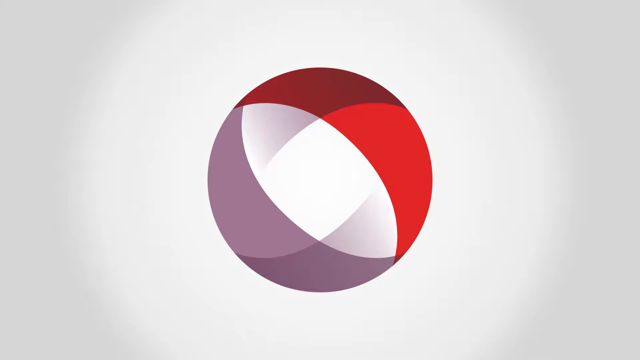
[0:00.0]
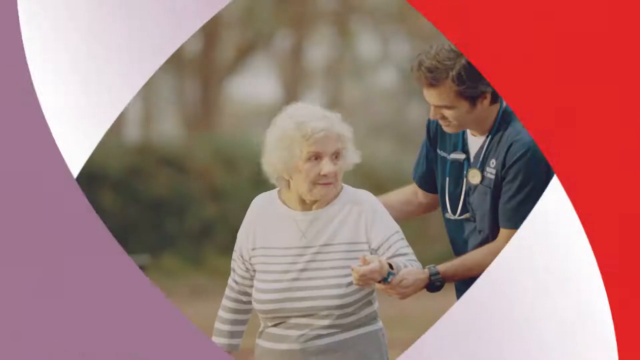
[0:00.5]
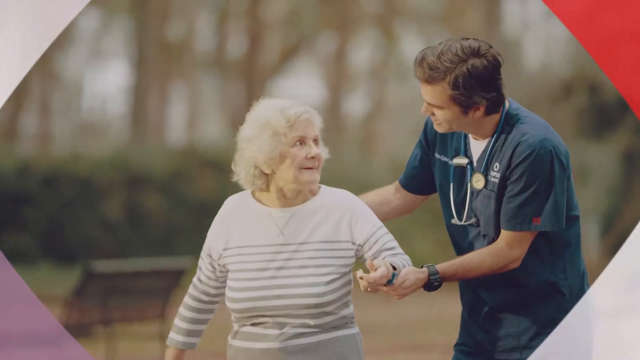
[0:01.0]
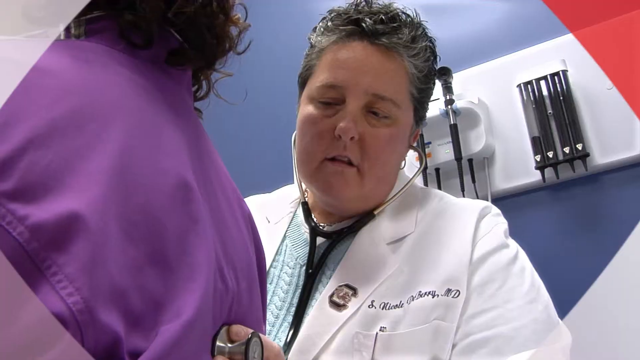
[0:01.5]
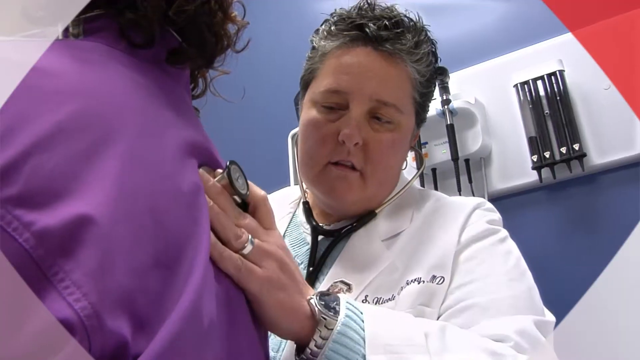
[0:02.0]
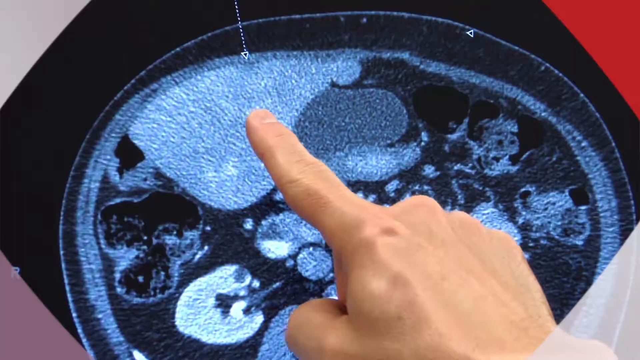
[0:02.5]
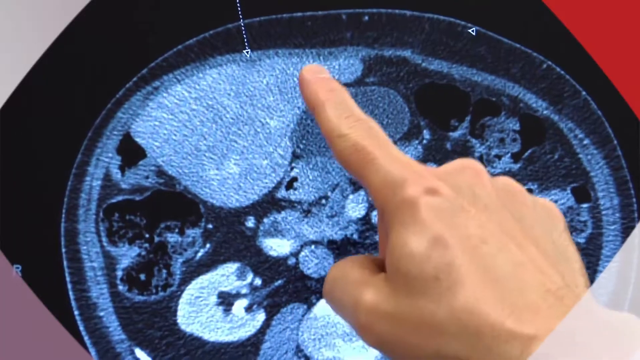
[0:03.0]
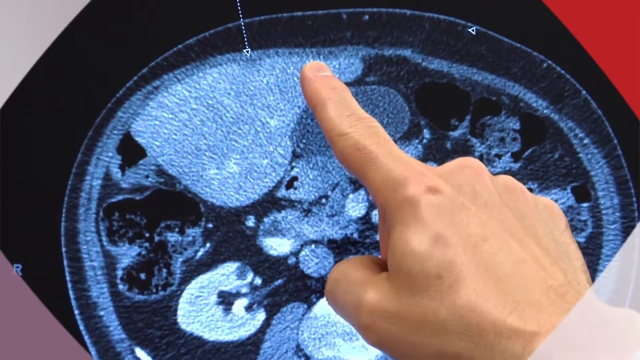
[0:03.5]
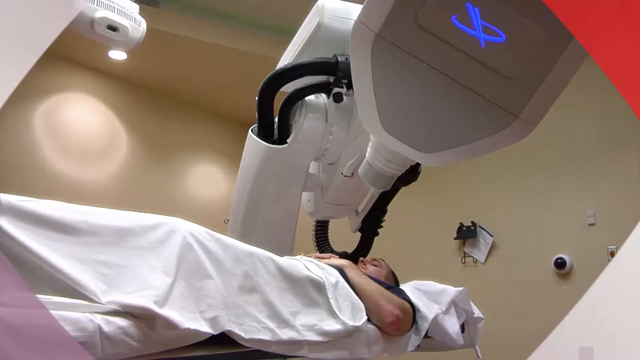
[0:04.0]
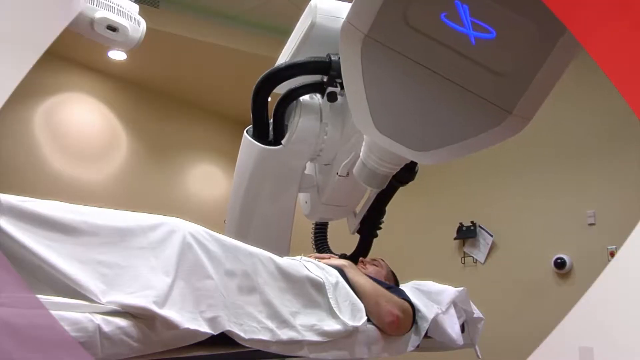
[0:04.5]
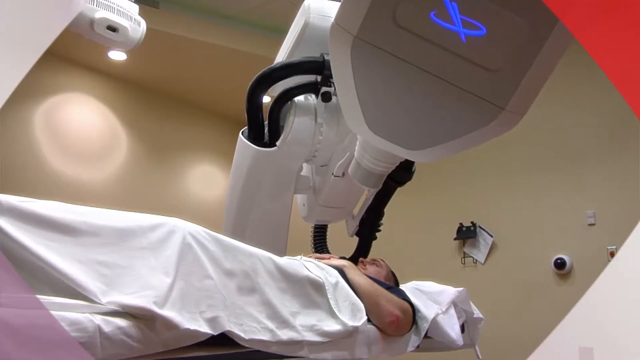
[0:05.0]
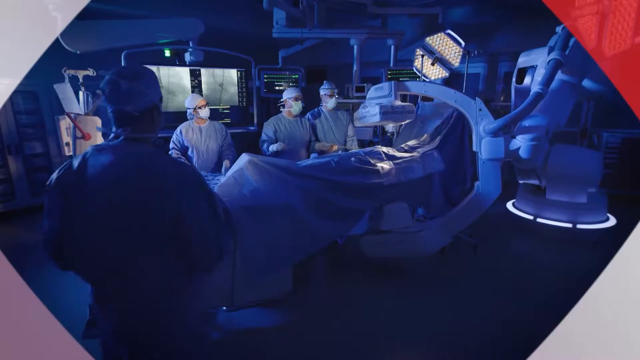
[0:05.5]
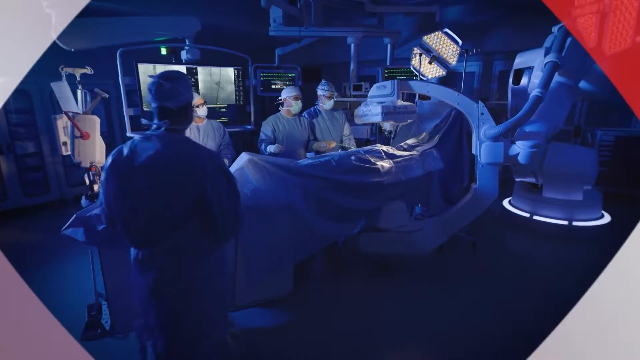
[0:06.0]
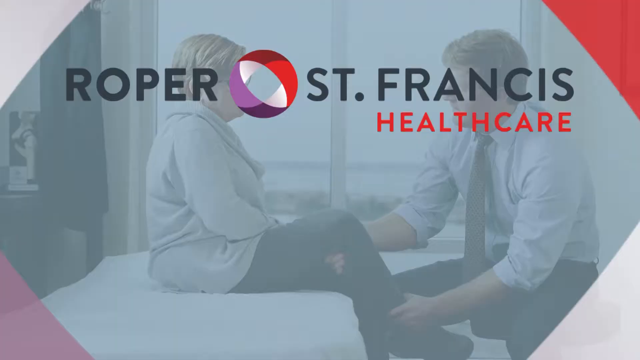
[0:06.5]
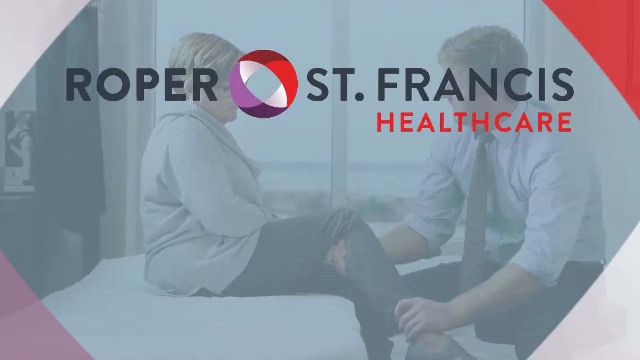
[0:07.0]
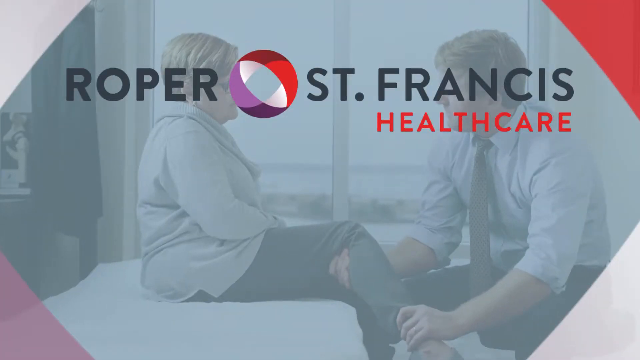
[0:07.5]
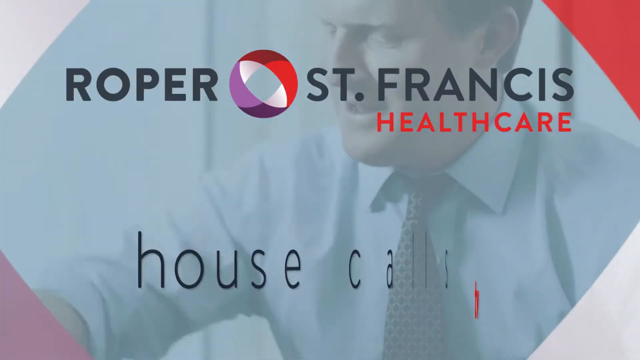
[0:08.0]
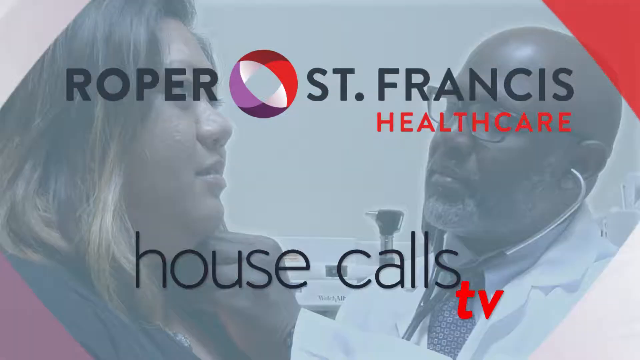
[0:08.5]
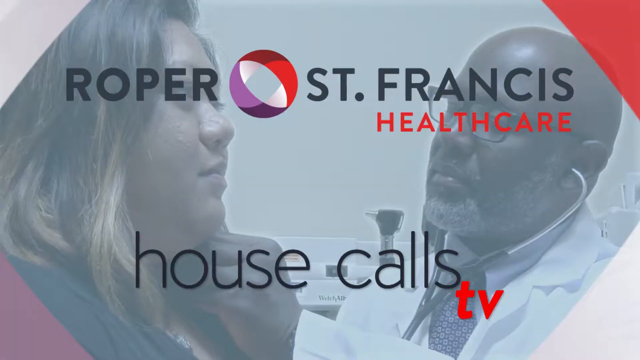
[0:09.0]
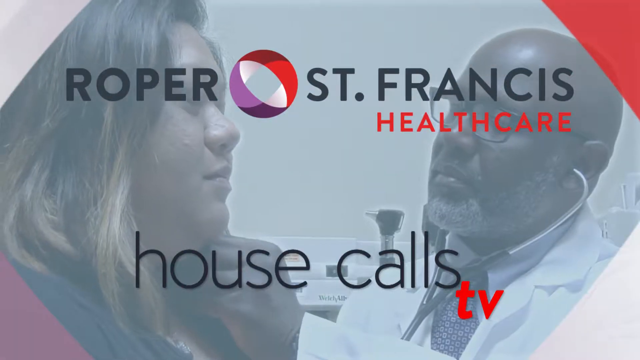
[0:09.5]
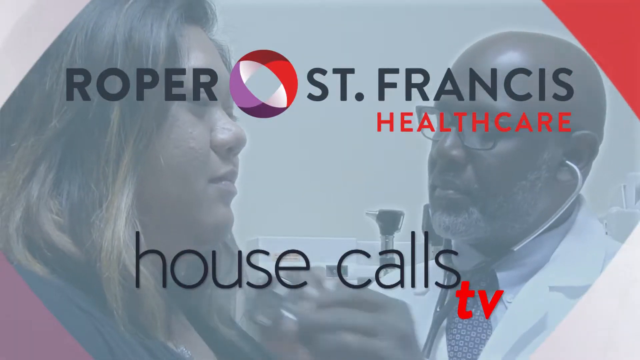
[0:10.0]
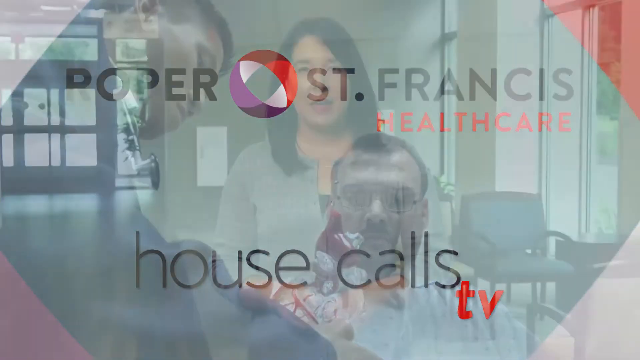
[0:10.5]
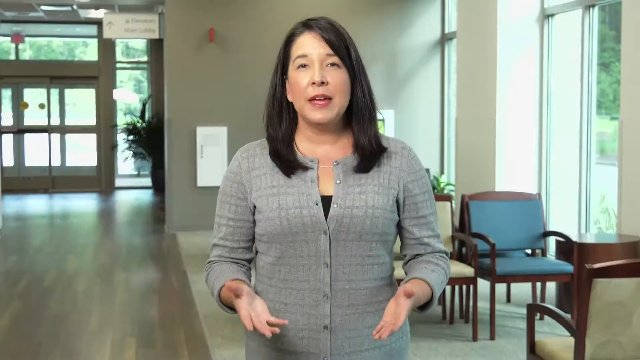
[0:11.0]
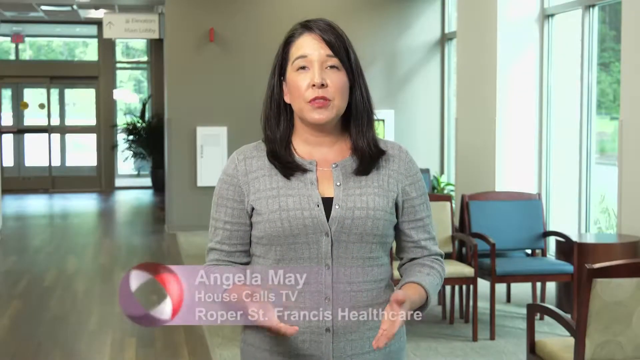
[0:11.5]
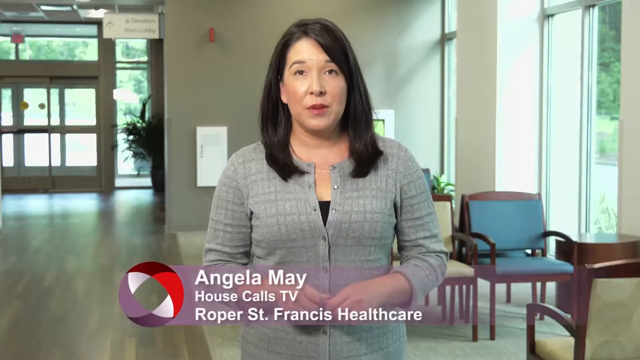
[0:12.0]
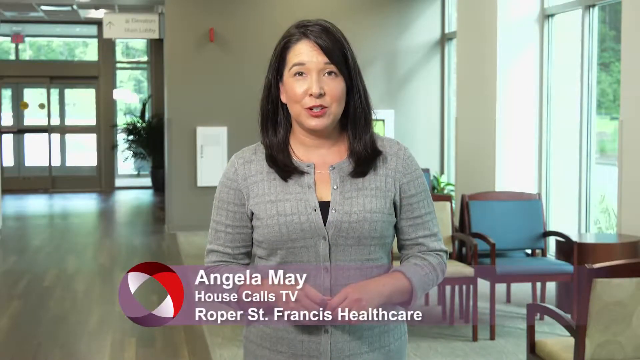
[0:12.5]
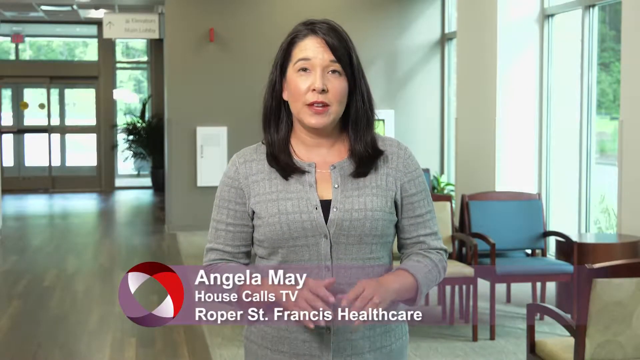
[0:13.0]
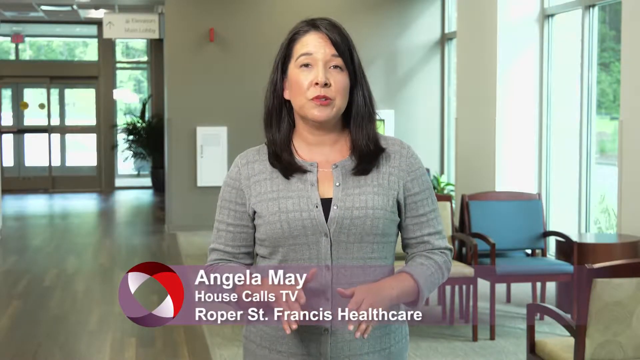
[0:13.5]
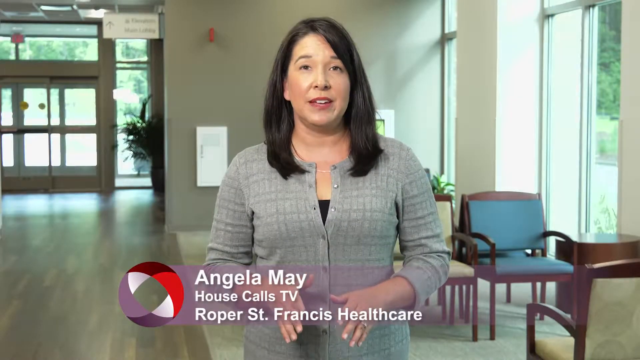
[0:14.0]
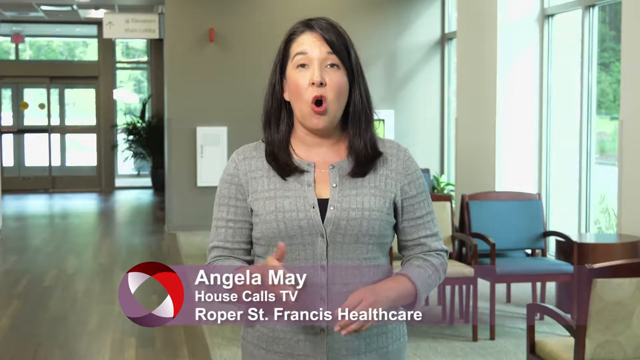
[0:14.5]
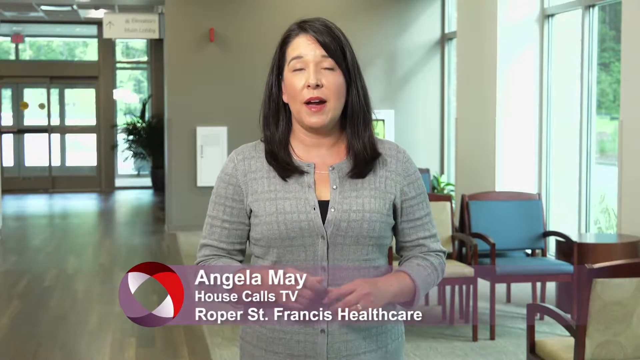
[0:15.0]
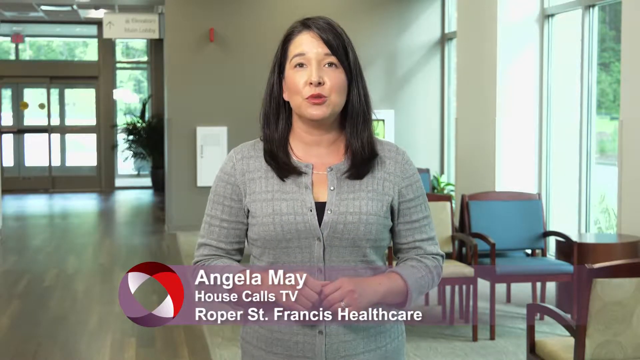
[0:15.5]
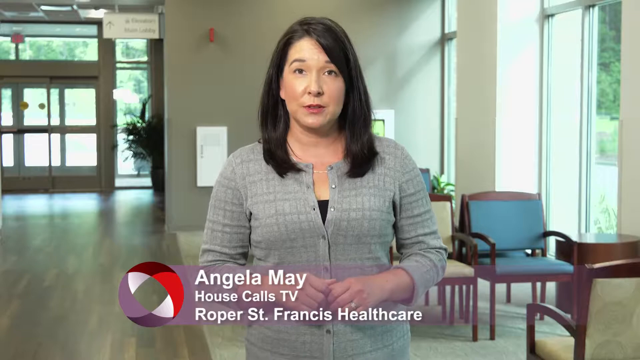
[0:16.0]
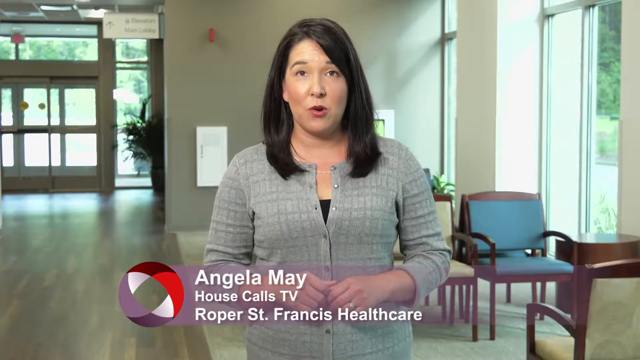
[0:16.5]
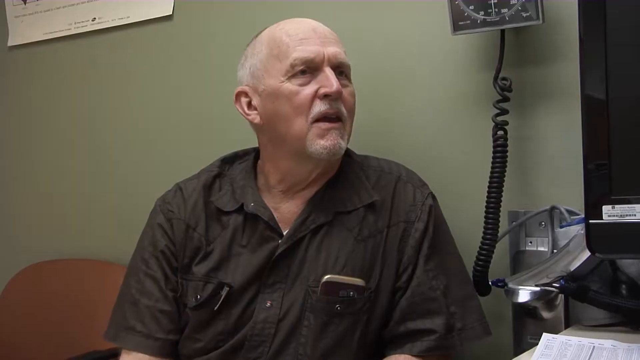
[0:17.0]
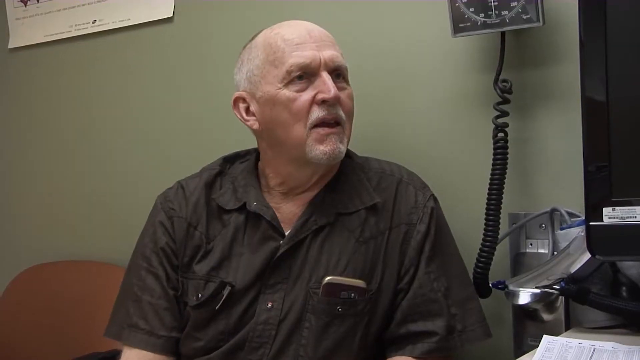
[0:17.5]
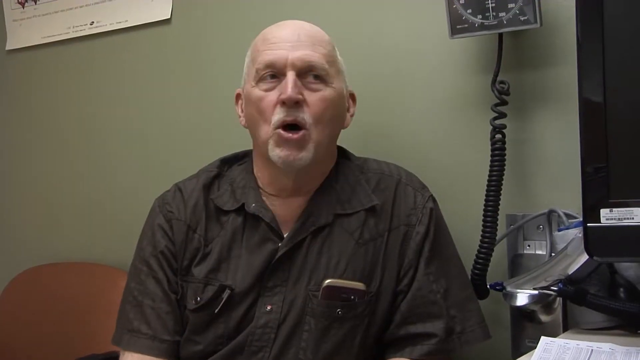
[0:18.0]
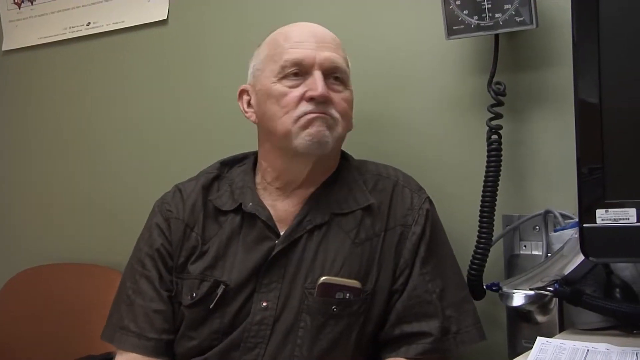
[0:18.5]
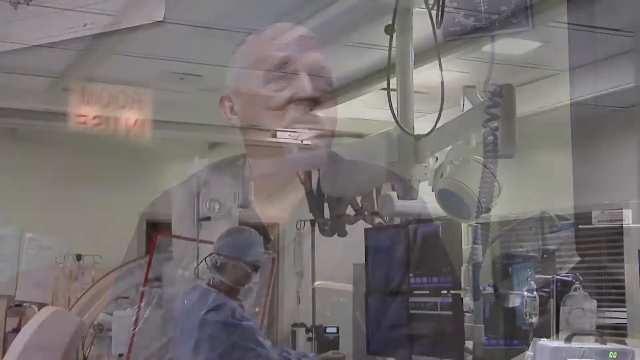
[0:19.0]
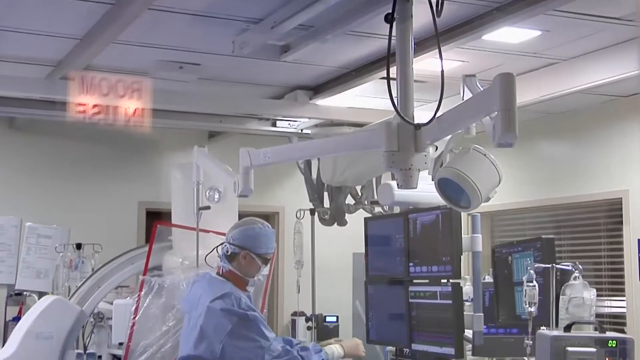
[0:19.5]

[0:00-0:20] The video opens with a logo that might be related to the organization. A compilation of different angles and clips inside an office follows. It is a medical space: a doctor uses an instrument to listen to a patient's heartbeat, then another doctor analyzes brain wave activity, mainly from CAT scans the patient had done, followed by two other clips of patients at the office. The name of the healthcare facility, "Roper St. Francis Healthcare," then appears, with a very faded stock video in the background, so the focus is on the logo and the facility's name, shown in red, white, and purple. A transition then shows "House Calls TV." A woman named Angela May, the host of the segment from House Calls TV, is introduced reporting from the Roper St. Francis Healthcare facility. The background is a hospital entrance and lobby area with the kind of chairs hospitals typically have. One of the patients is then introduced and is kind of talking.